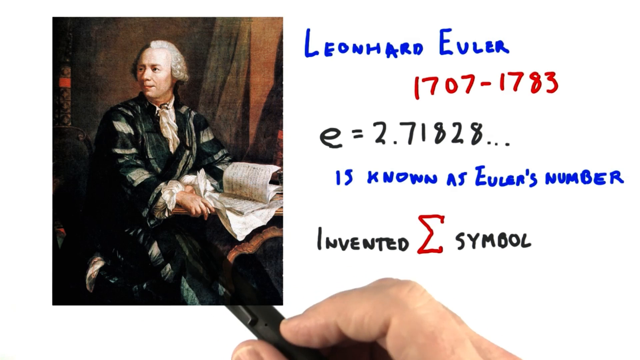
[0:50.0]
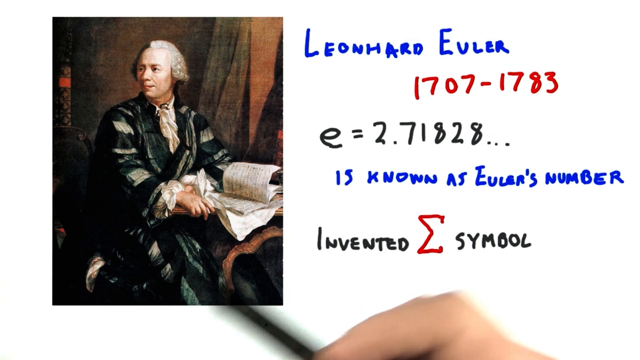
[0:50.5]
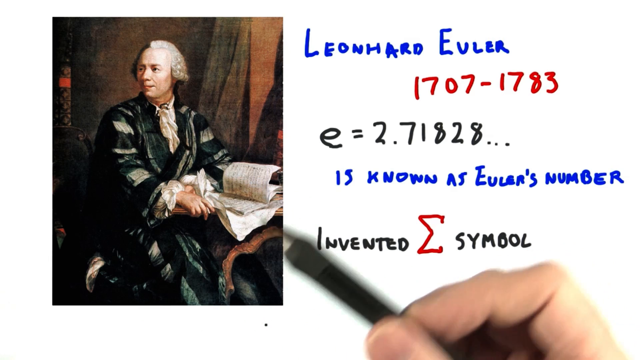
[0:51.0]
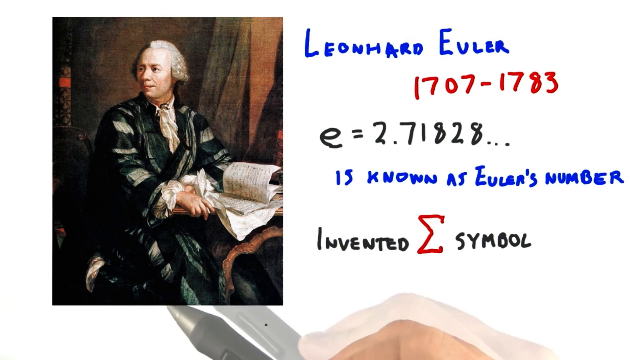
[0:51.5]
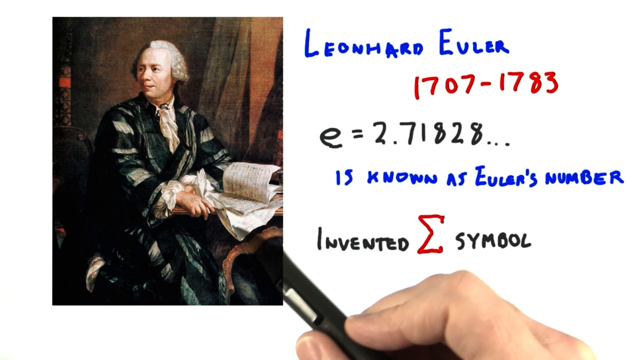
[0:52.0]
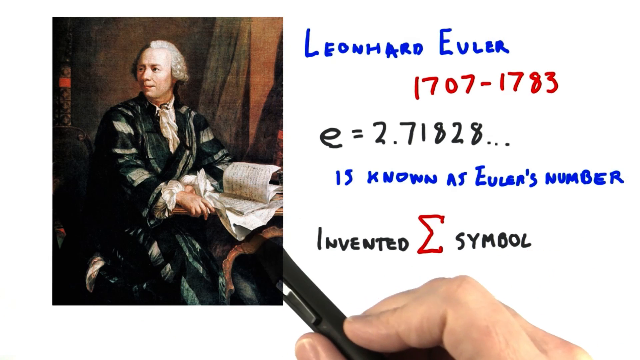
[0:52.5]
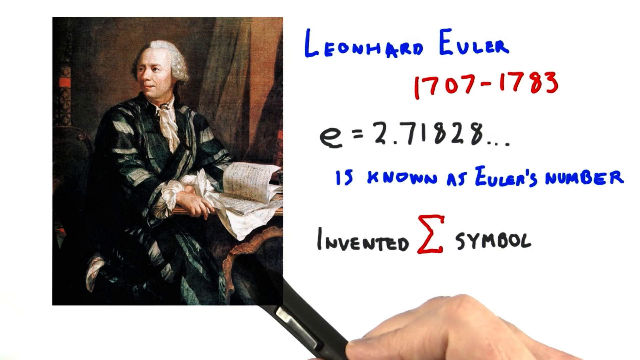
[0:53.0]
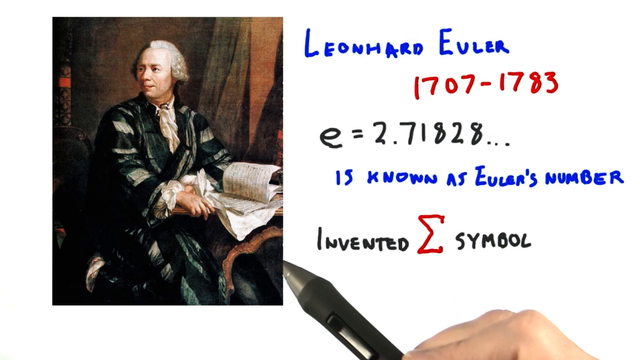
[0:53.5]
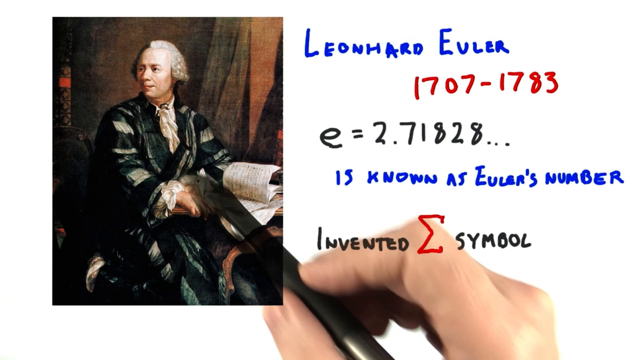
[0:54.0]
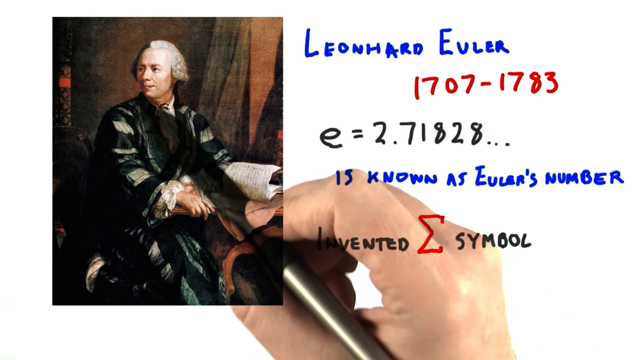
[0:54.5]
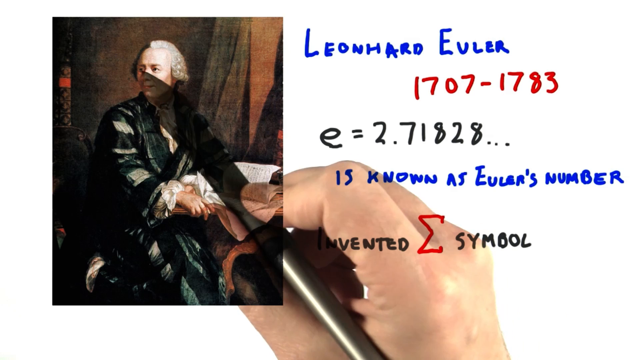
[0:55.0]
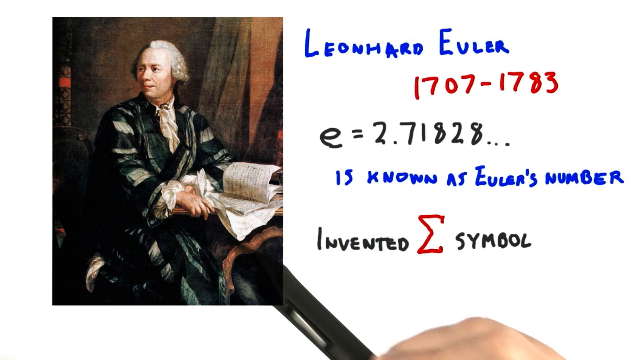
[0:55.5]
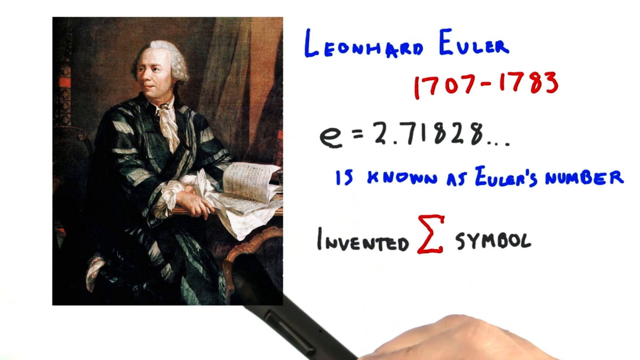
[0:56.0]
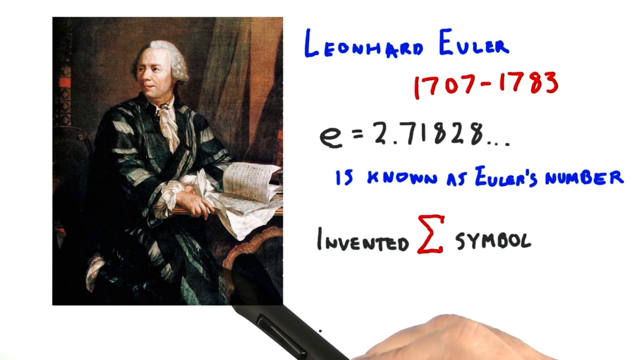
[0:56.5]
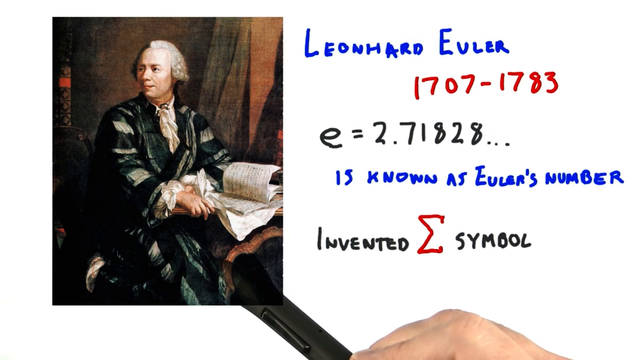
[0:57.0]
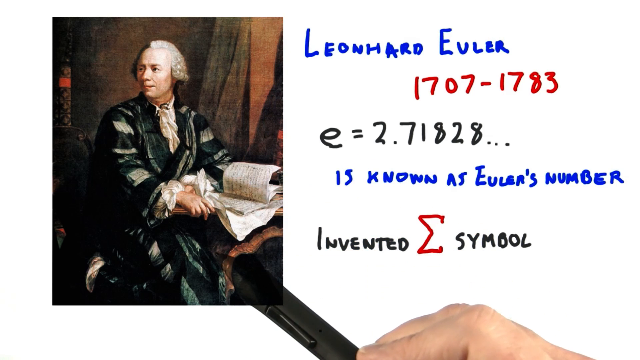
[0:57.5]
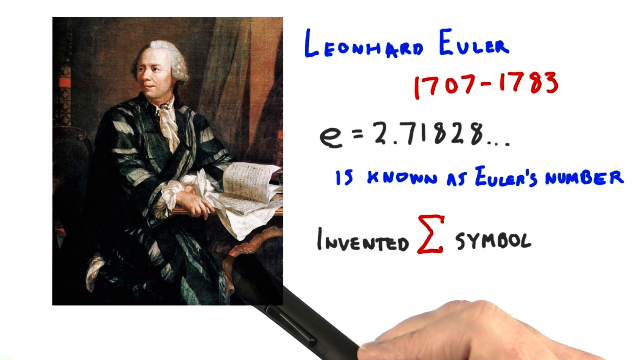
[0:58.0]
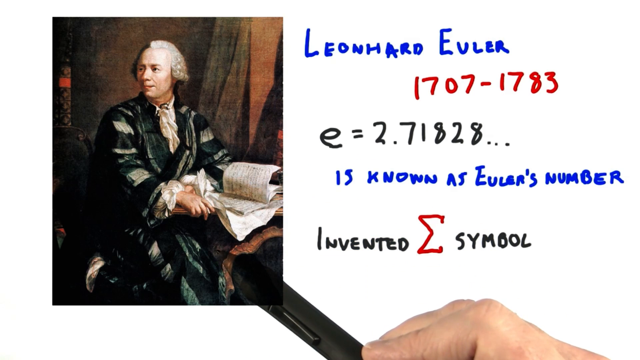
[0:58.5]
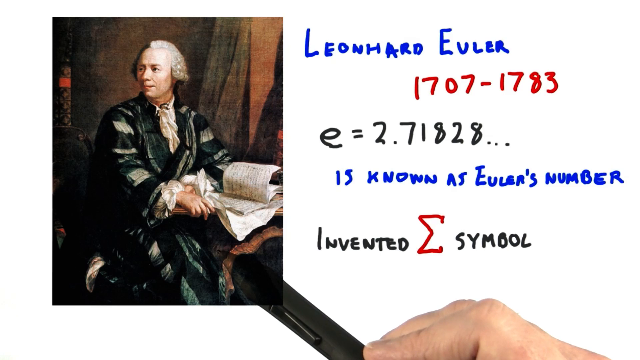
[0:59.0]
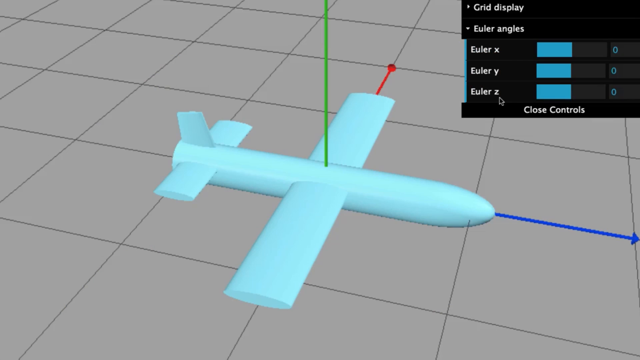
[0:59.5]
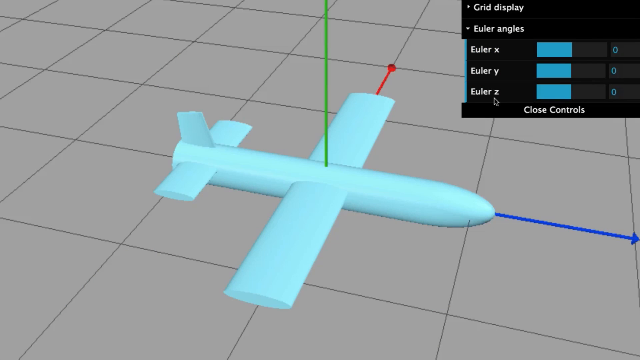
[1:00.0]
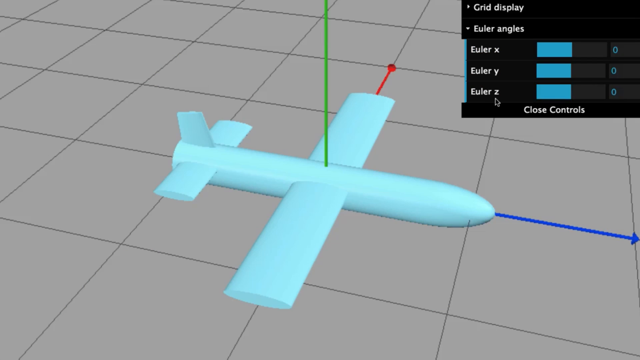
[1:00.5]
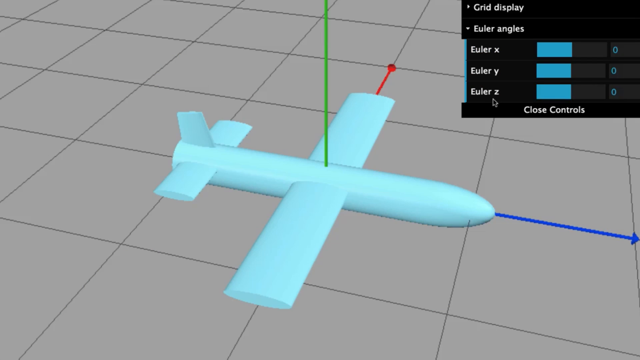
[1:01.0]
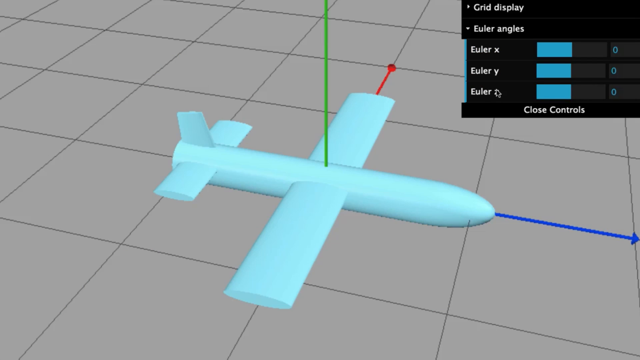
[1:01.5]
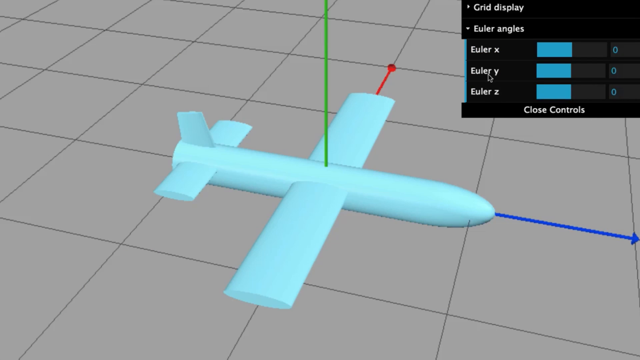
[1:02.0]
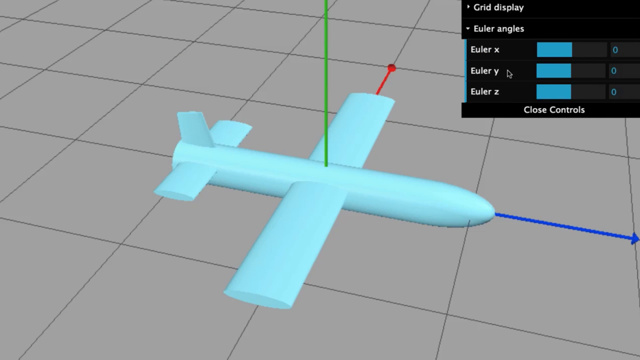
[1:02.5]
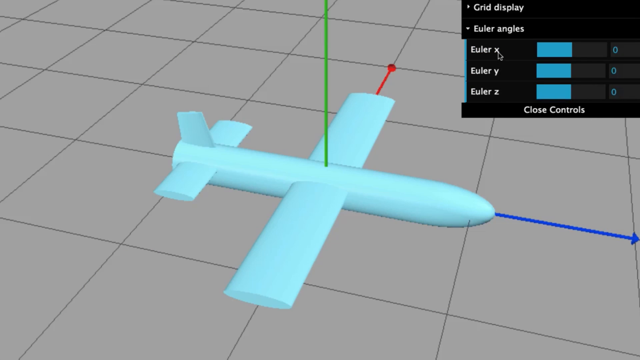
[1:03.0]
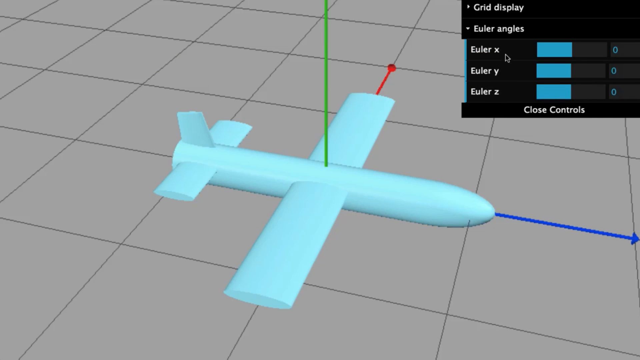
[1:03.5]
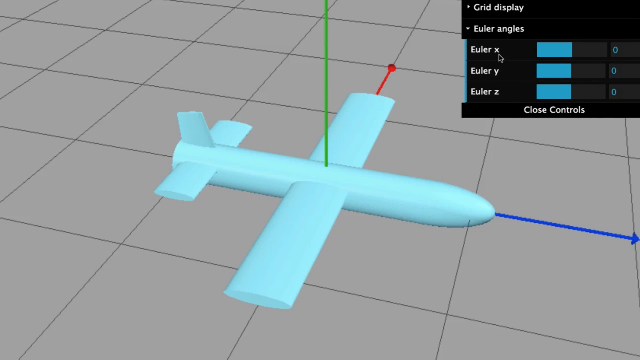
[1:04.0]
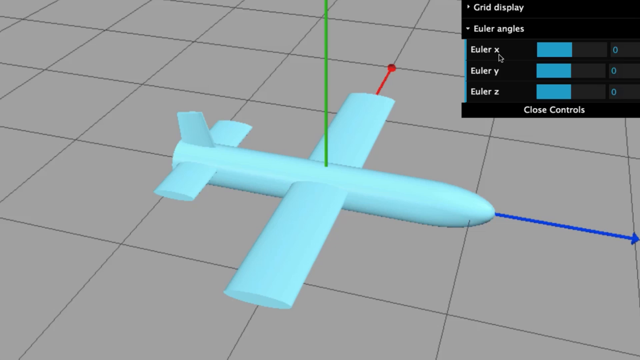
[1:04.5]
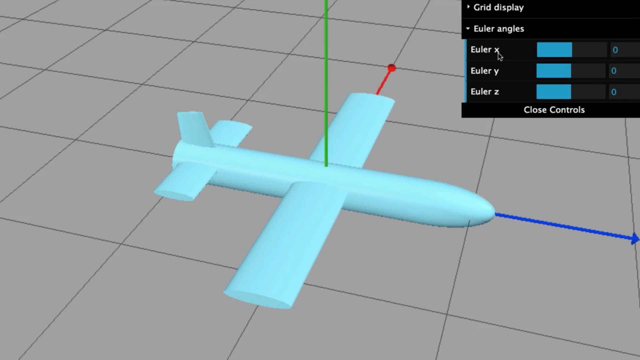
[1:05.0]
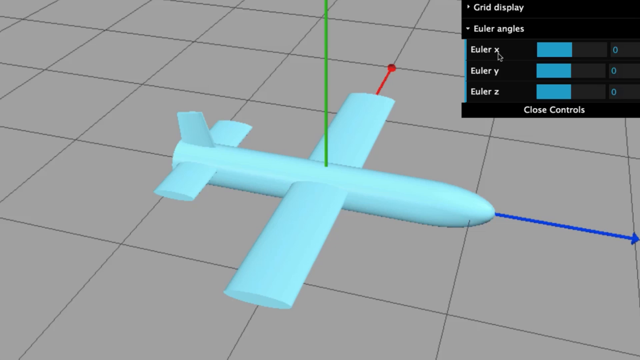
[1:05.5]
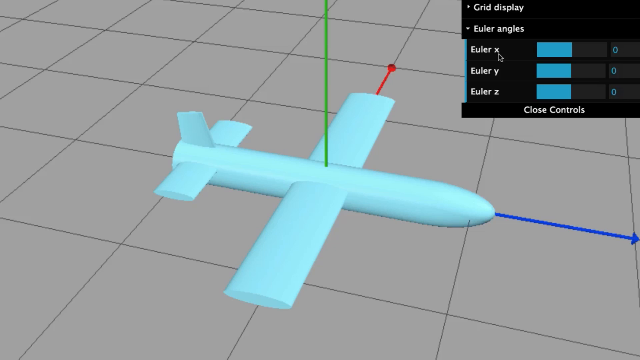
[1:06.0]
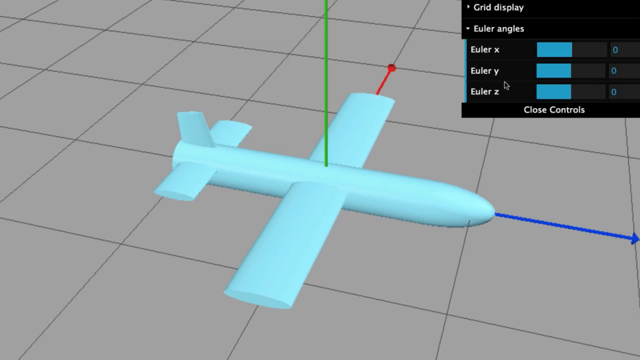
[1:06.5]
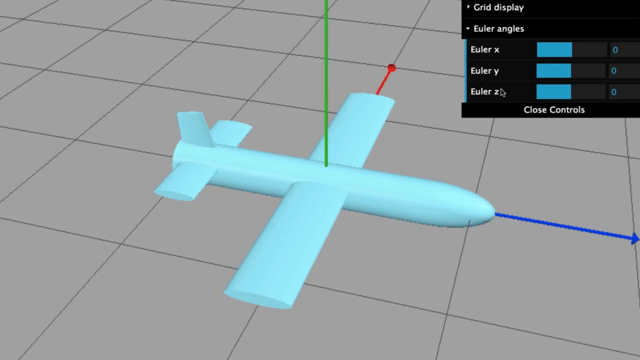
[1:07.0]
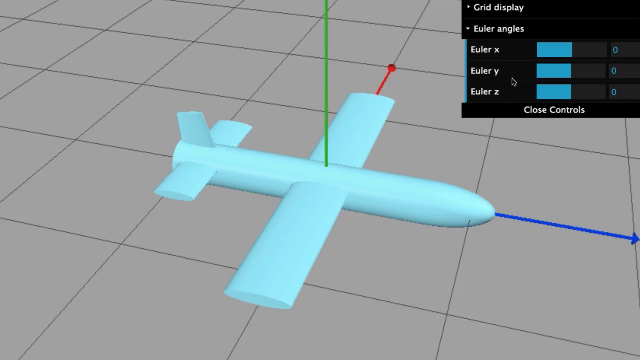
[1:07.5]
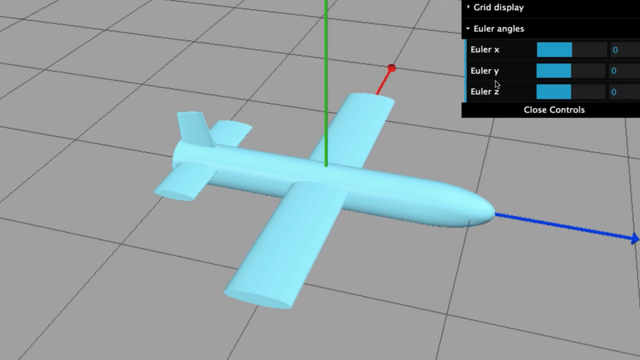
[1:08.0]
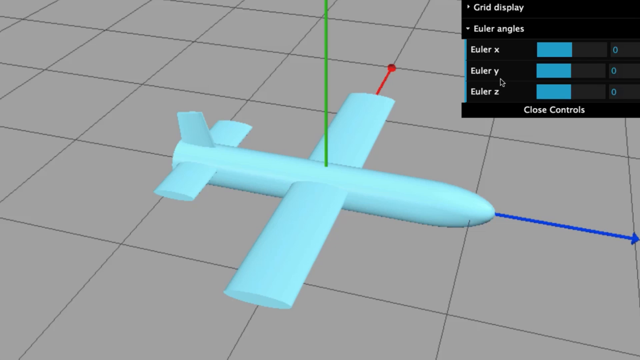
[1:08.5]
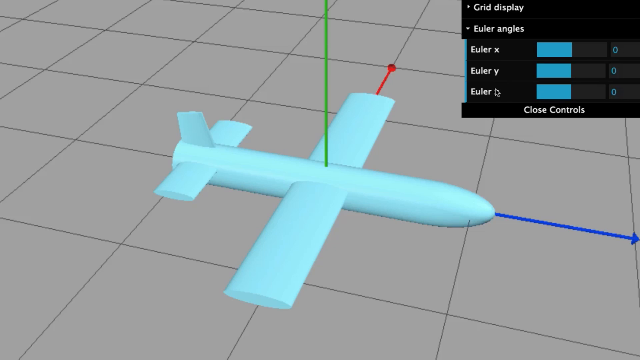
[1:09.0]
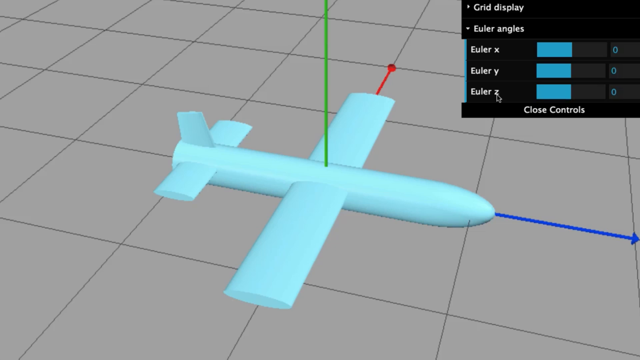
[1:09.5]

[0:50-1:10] On the left of the white screen is a picture of a painting of a man sitting at a brown desk, of which only a little is visible. On the desk is an open book with crinkly white pages. The man wears a white powdered wig, a white scarf and a big robe that goes from his shoulders all the way to the ground, black with light gray and dark gray stripes. The background looks like a wood wall. To the right of the picture, at the very top in blue, is "Leonard Euler"; beneath it in red, "1707-1783"; beneath that in black, "e = 2.71828"; under that in blue, "is known as Euler's number"; and beneath that the word "invented", followed by a large symbol that looks like the letter E, but with the middle line missing and the top and bottom lines going diagonally into the middle, and then the word "symbol" in black. A hand holding a black pen moves around and points at parts of the picture. The video then cuts to a screen that is completely gray, made up of gray squares, with a blue shape that looks like an airplane in the middle: a long tube body, two wings, one off each side, a tail wing and a fin. In the top right-hand corner is a black square reading "grid display", "Euler angles", "Euler X", "Euler Y" and "Euler Z", with "close controls" underneath.